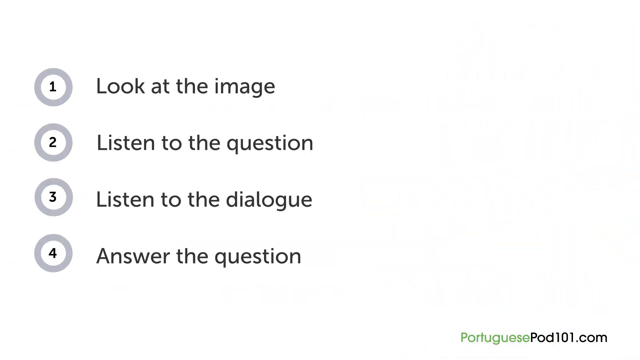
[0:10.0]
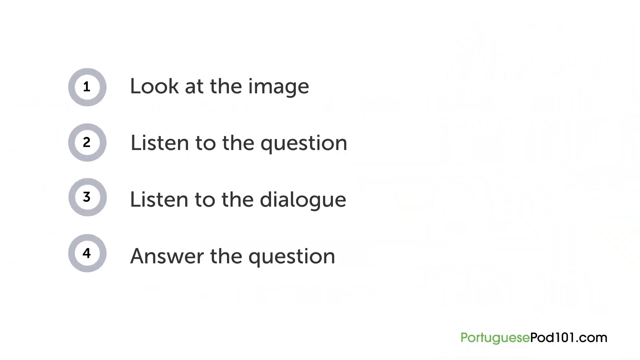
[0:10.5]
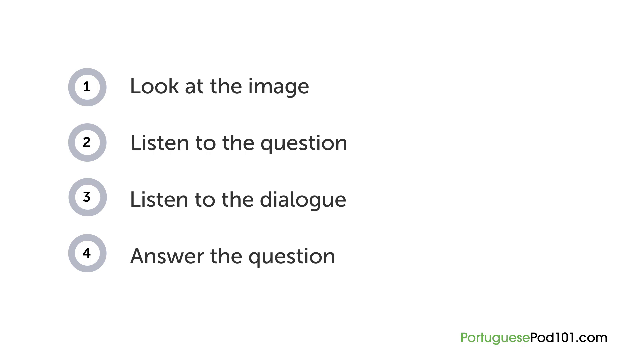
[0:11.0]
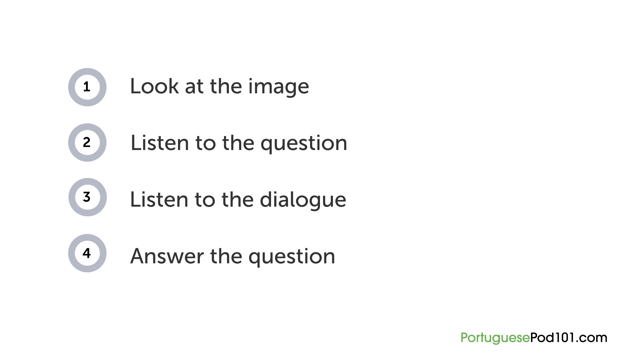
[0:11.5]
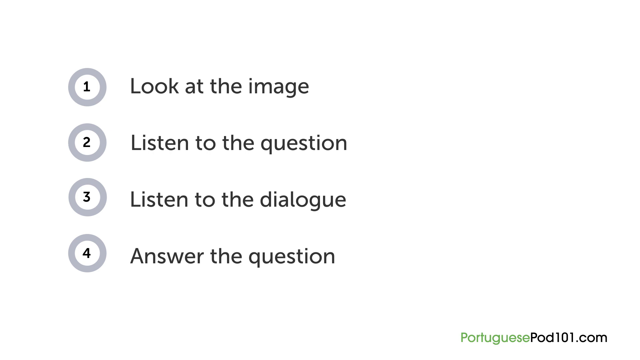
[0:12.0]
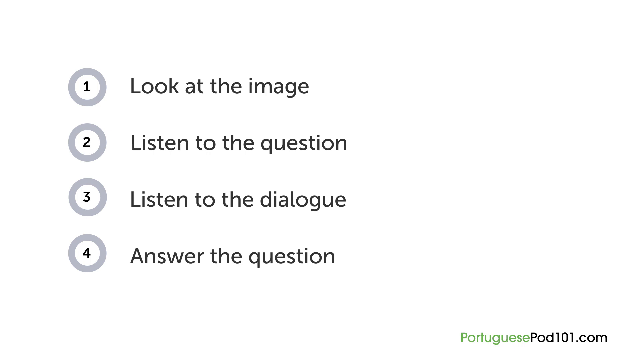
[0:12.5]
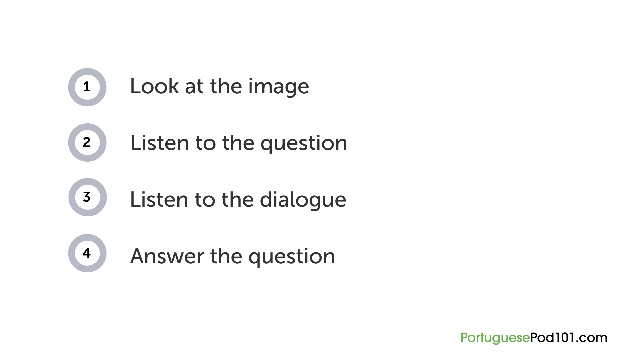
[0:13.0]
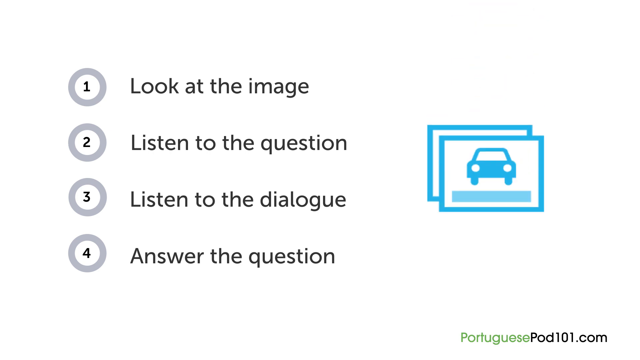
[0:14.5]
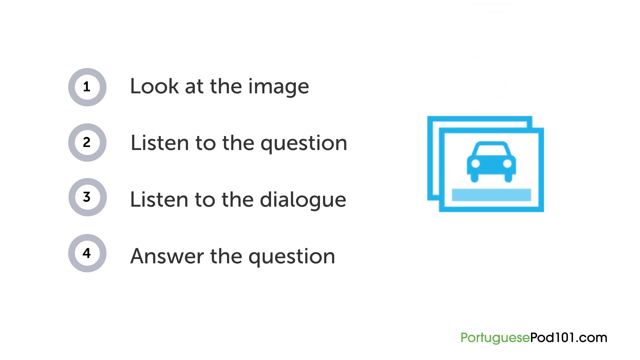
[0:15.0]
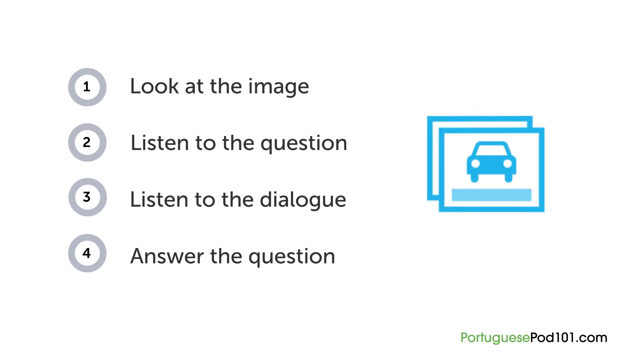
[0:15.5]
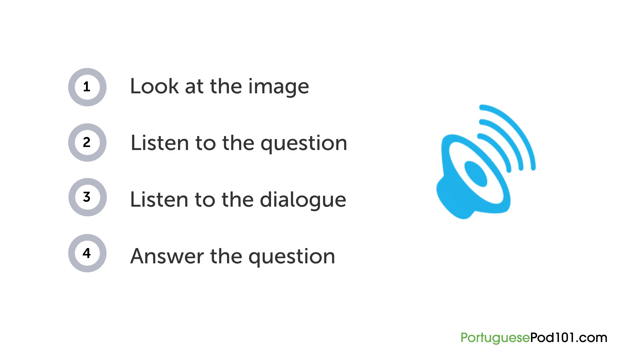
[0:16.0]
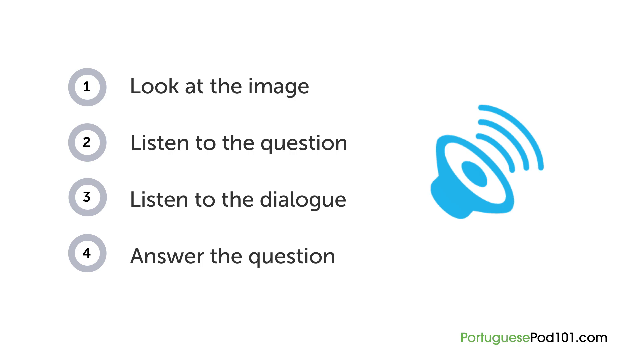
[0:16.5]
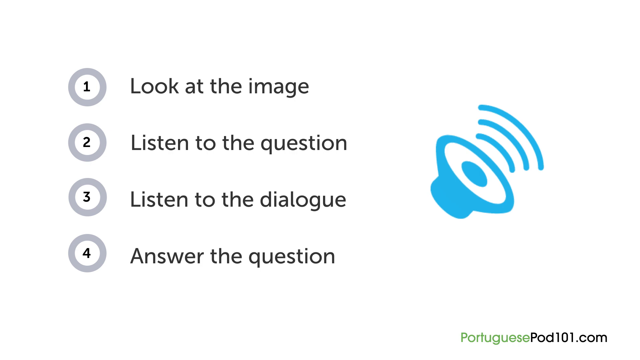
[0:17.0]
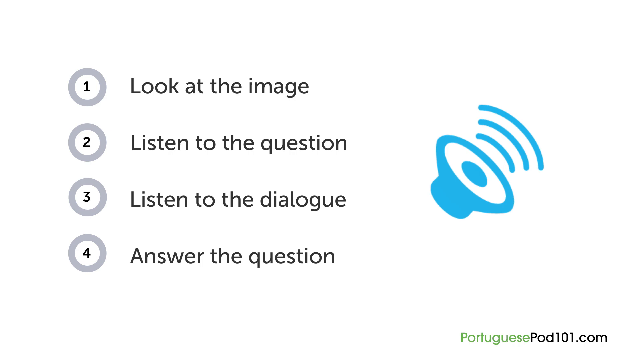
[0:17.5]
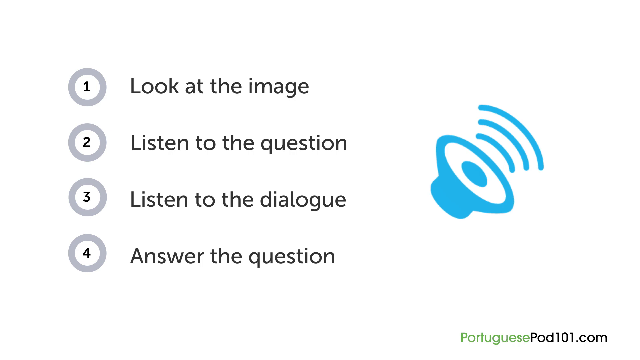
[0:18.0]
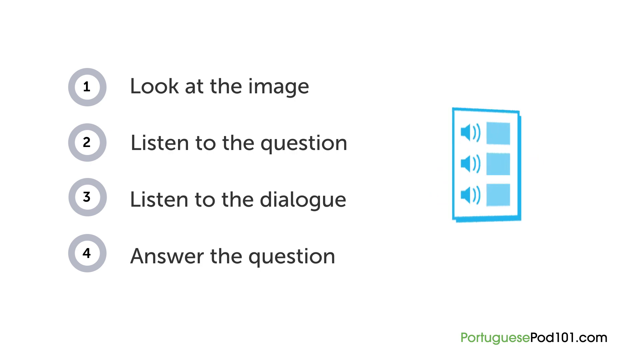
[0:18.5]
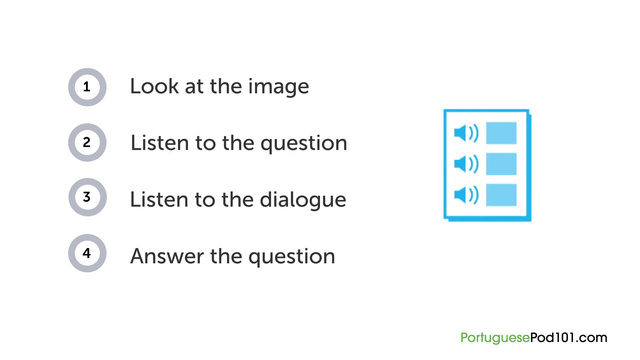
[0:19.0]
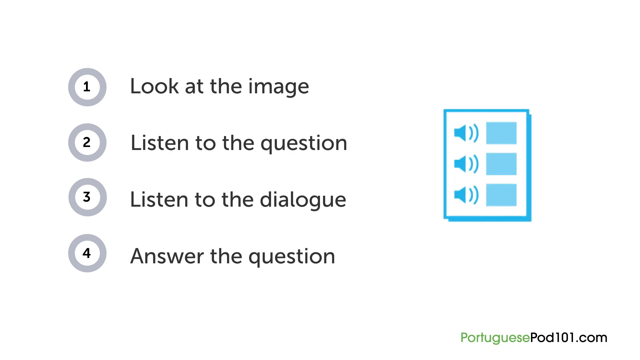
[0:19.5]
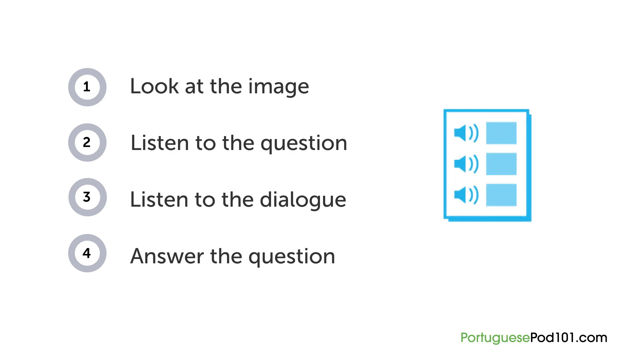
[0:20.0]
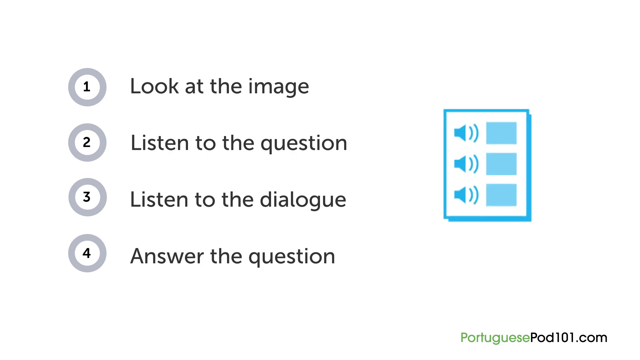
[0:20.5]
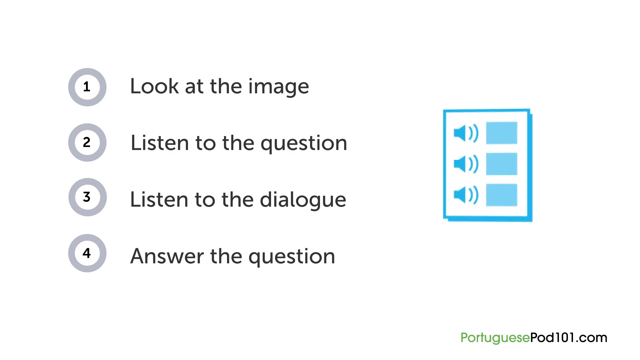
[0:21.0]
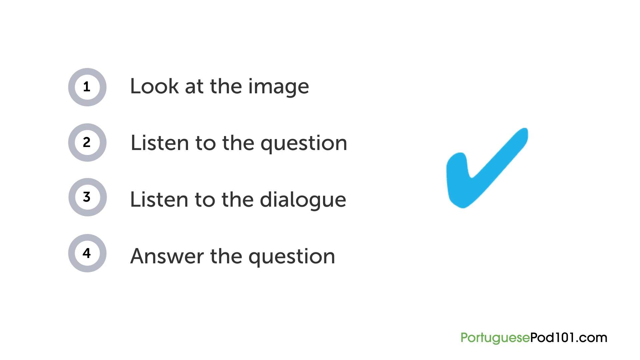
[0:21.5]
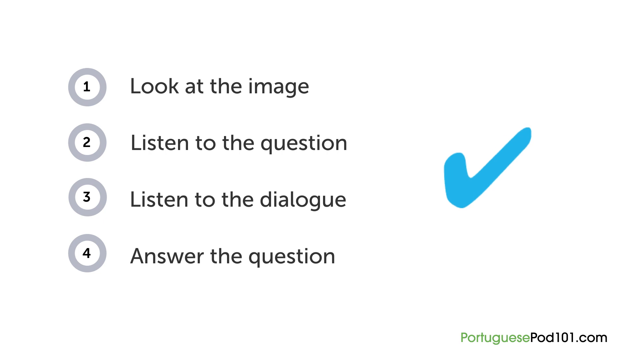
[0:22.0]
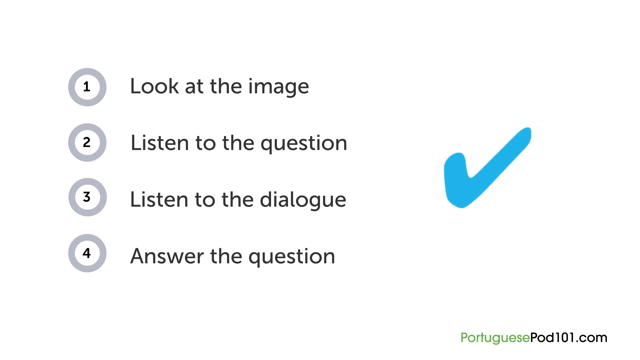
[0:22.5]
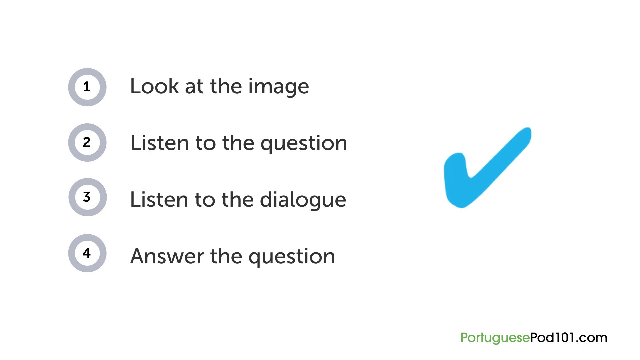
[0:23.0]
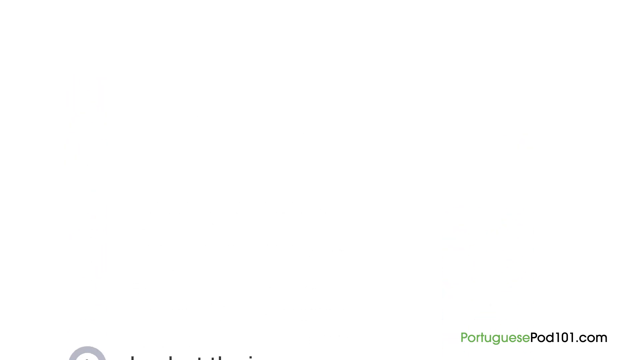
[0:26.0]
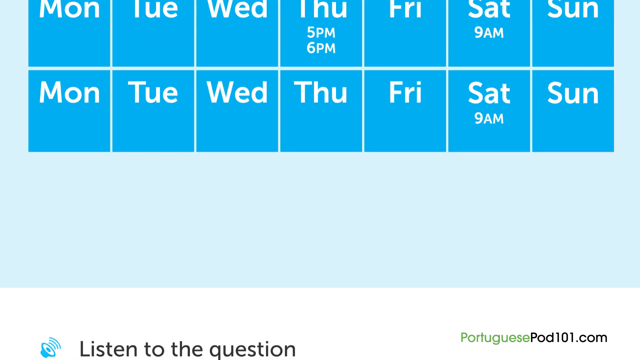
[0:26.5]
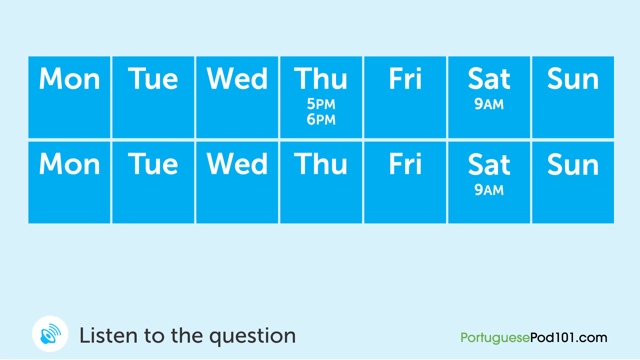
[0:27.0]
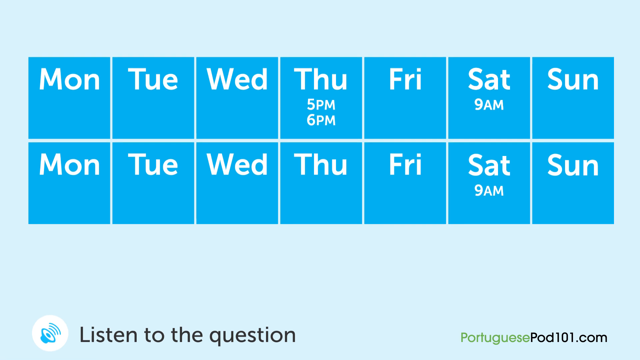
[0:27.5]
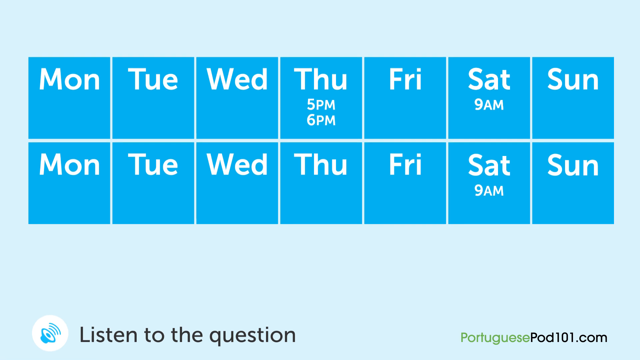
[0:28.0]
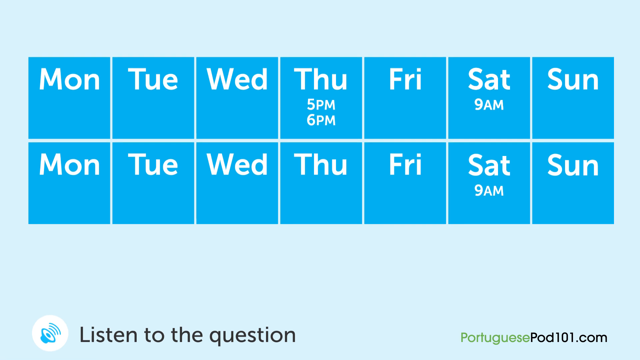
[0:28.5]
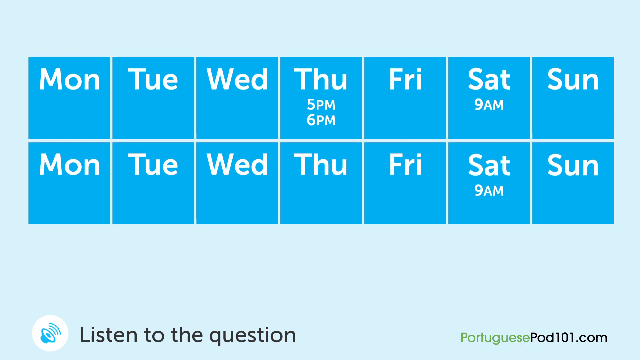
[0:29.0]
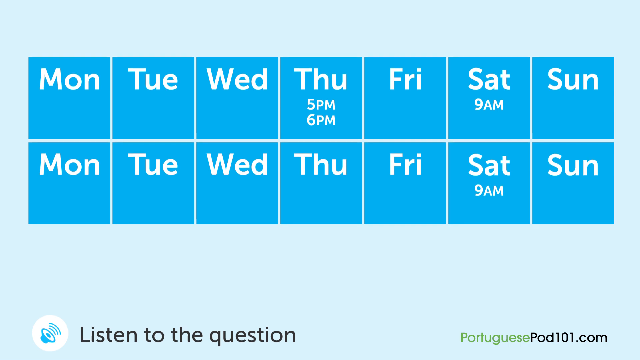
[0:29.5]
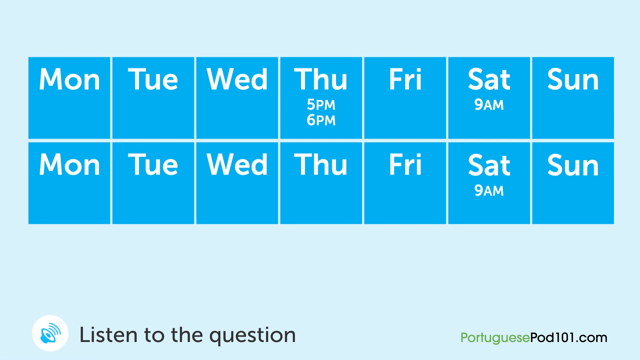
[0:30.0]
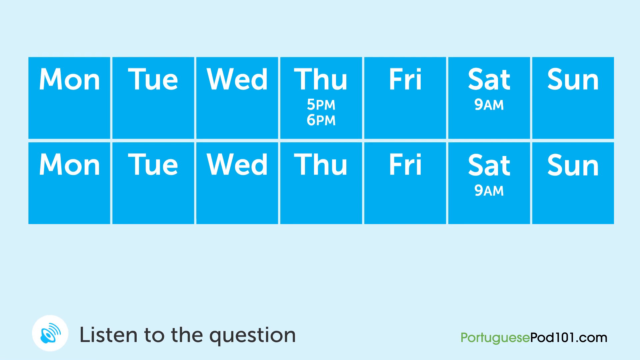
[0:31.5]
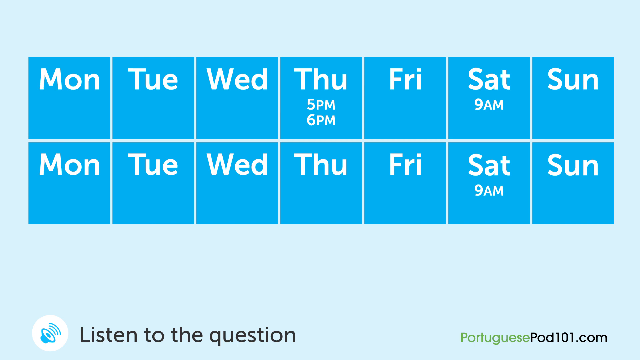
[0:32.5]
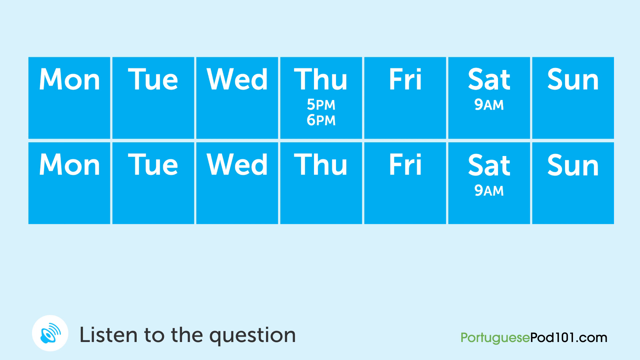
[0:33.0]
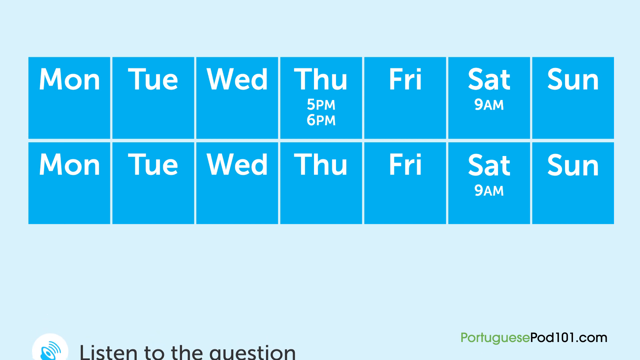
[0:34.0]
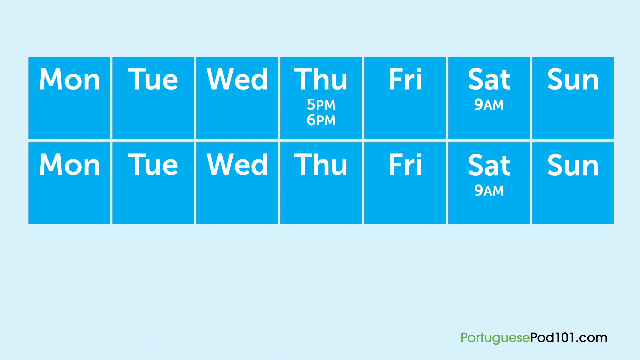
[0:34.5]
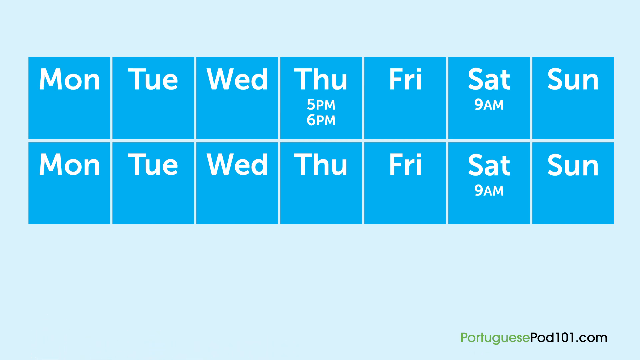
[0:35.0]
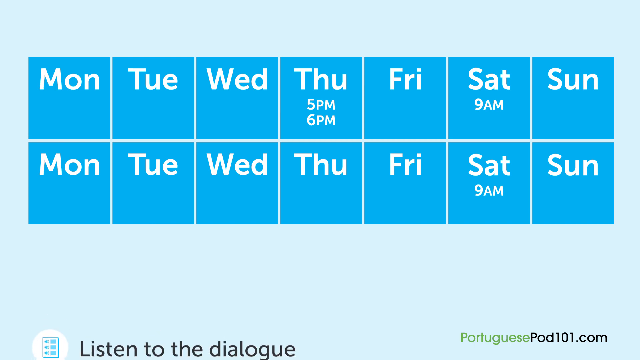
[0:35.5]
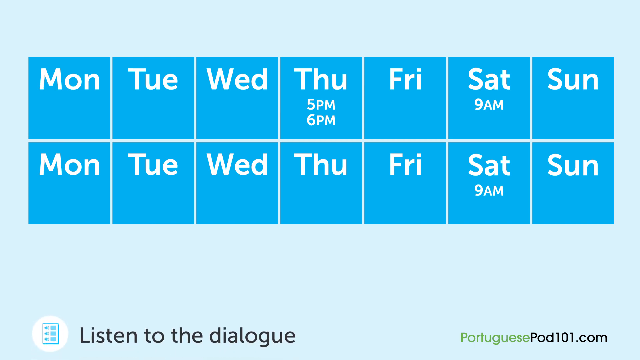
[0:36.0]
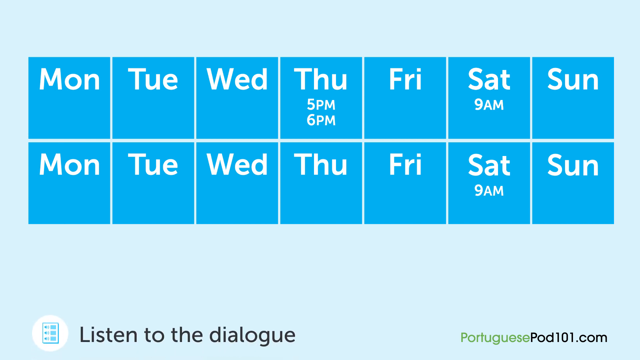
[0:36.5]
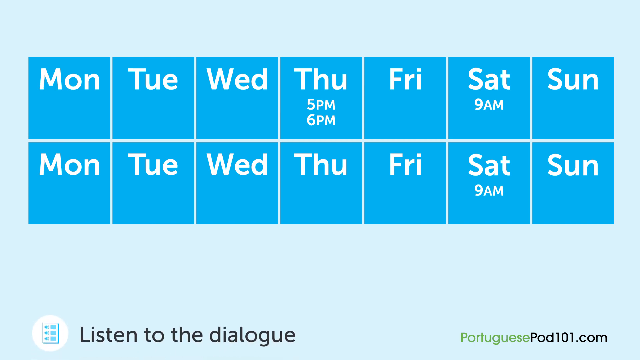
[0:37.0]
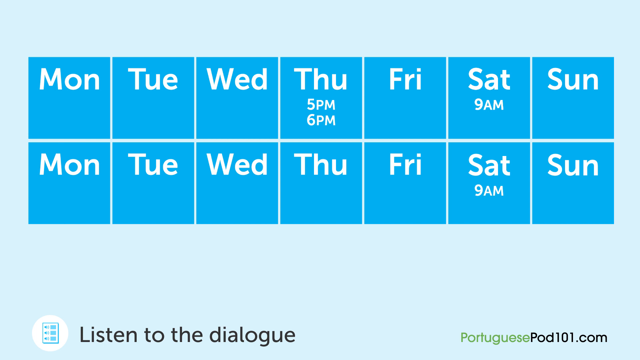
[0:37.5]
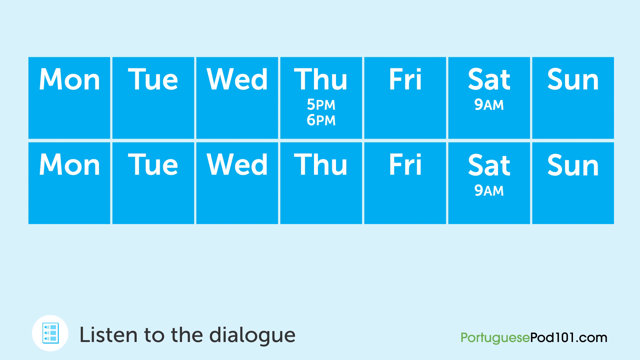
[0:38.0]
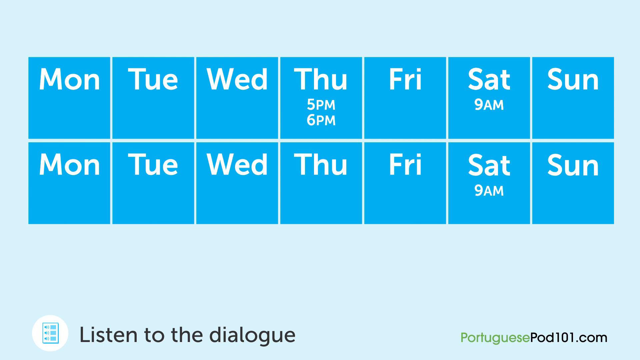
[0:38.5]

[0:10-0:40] A four-step process is laid out: looking at the image, listening to the question, listening to the dialogue, and then answering the question. Each step is written on its own line, and the steps are separated by circles. The number of each step is embedded in two circles, a small white one and a larger gray one, which form the barriers separating each row on the screen. Next, two pictures of a car appear on a postcard-like structure with a blue frame, followed by a picture of an audio, three pictures of speaker screens, and then a bold, thick blue checkmark. After that, a two-week calendar appears showing each day, Monday through Sunday, representing a schedule of learning.